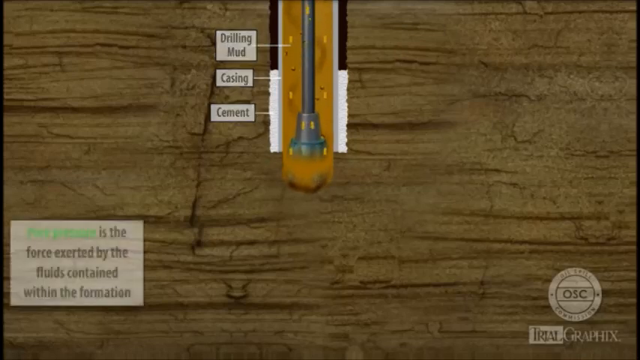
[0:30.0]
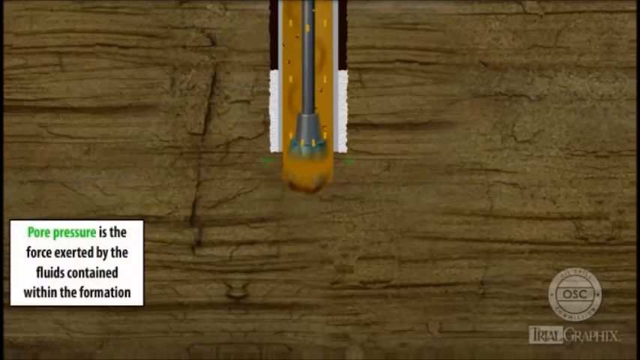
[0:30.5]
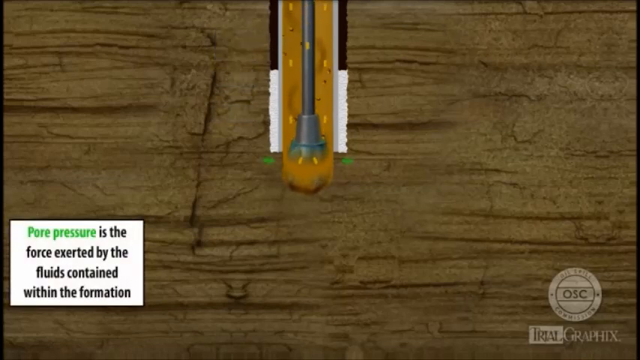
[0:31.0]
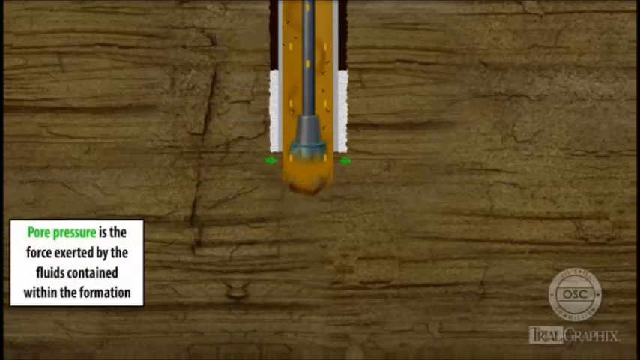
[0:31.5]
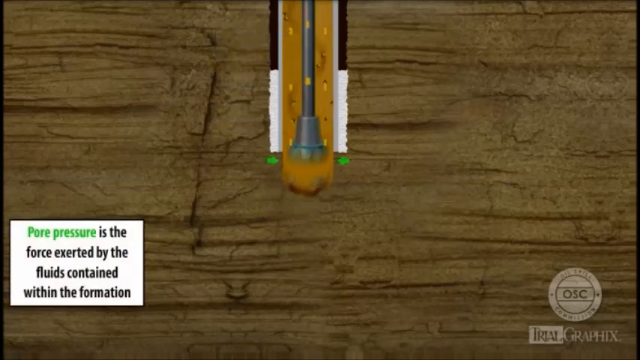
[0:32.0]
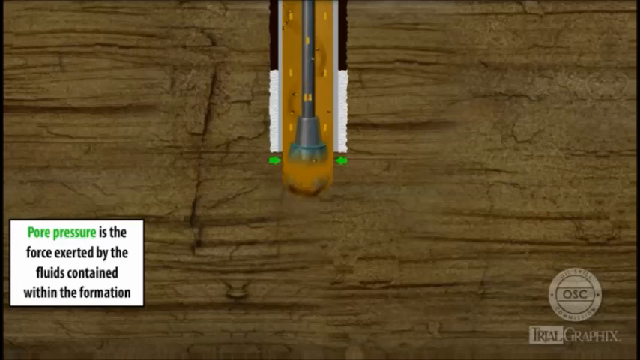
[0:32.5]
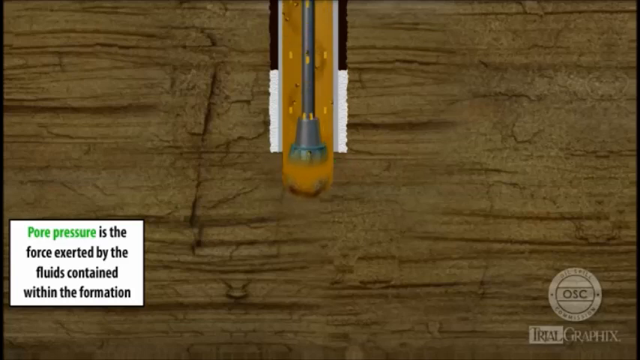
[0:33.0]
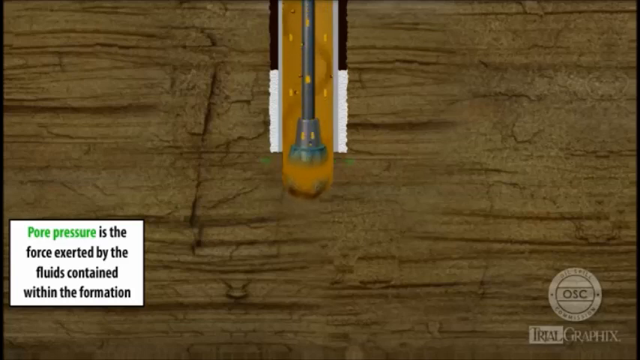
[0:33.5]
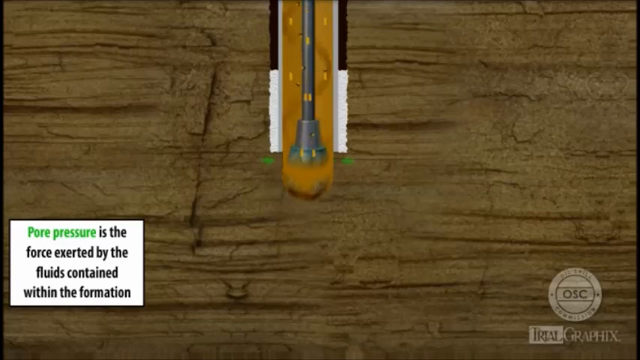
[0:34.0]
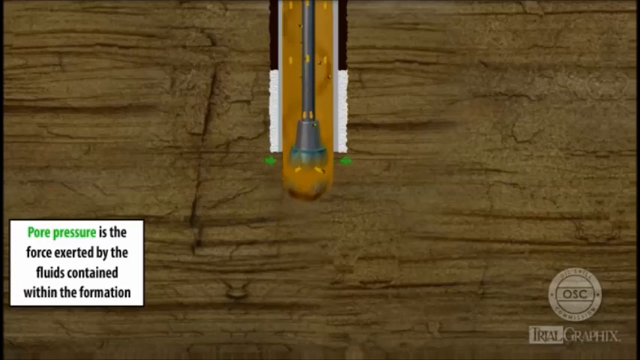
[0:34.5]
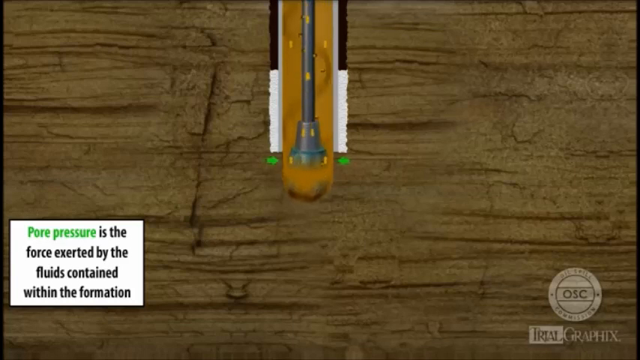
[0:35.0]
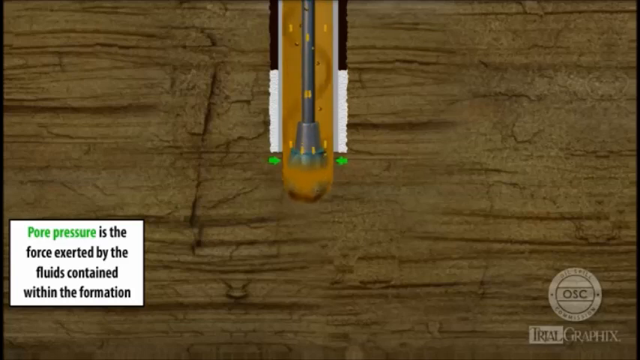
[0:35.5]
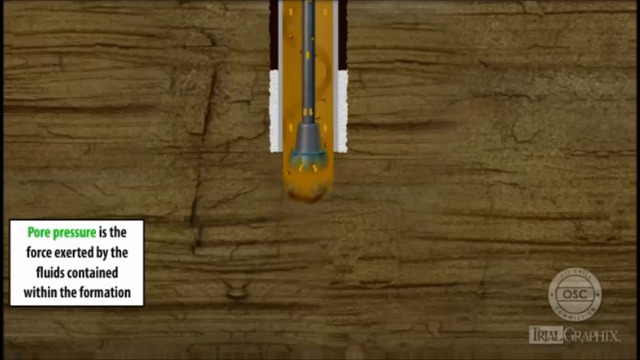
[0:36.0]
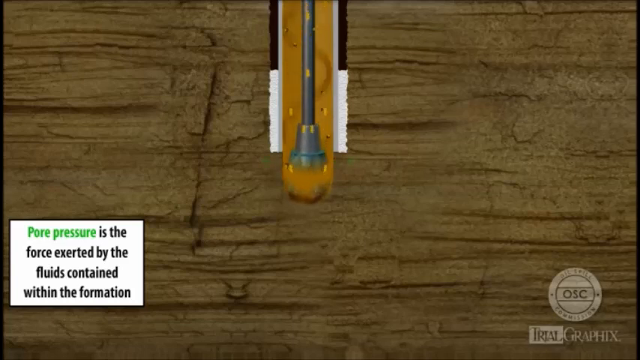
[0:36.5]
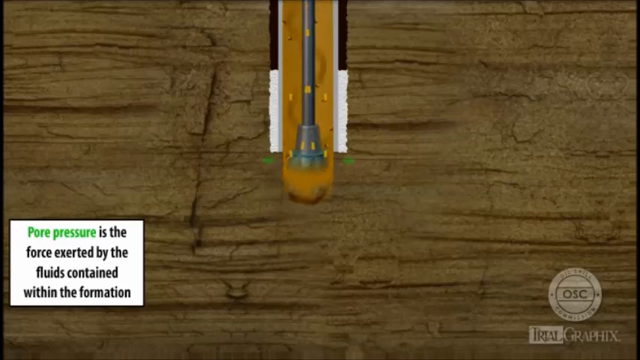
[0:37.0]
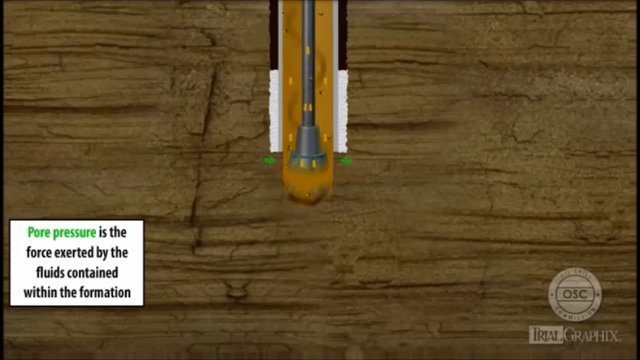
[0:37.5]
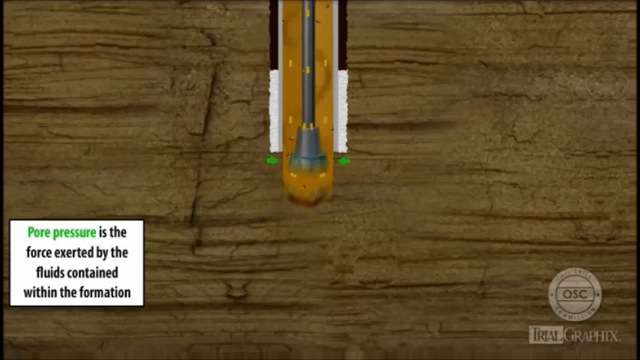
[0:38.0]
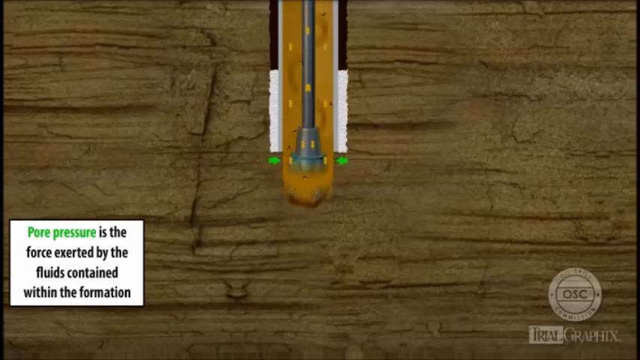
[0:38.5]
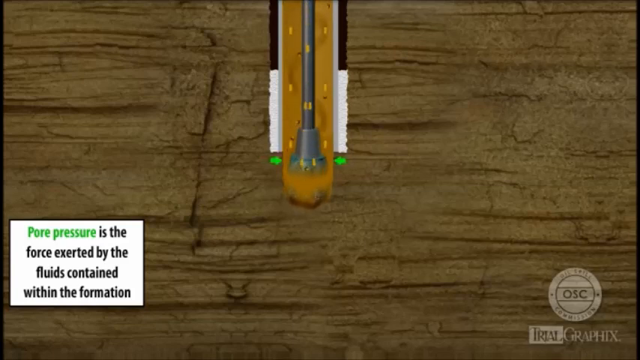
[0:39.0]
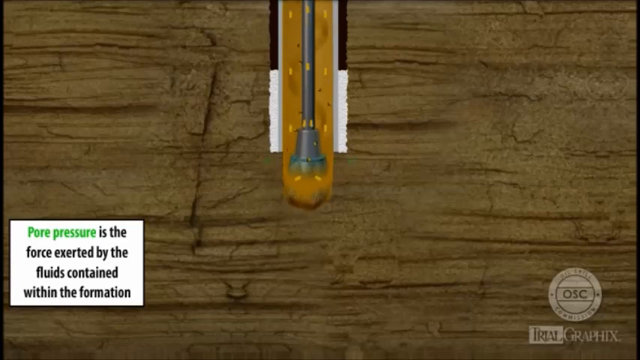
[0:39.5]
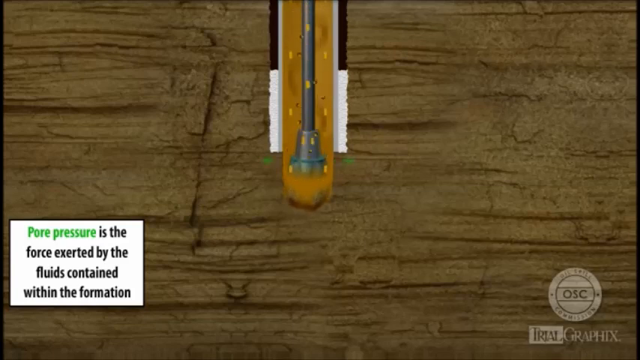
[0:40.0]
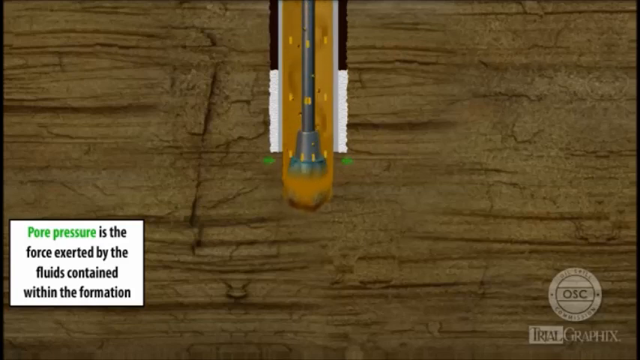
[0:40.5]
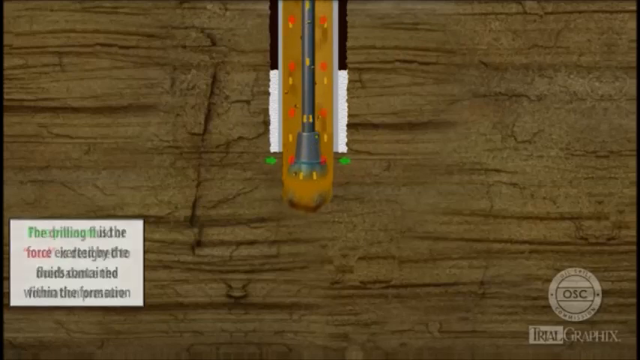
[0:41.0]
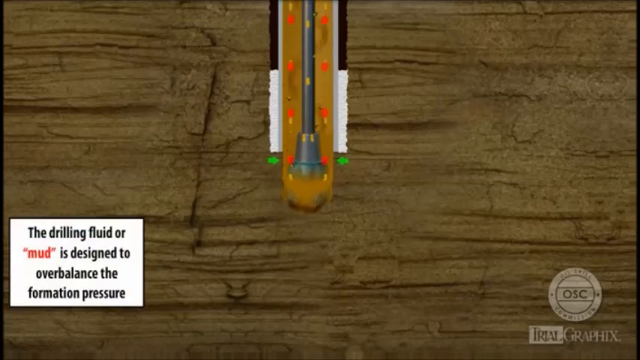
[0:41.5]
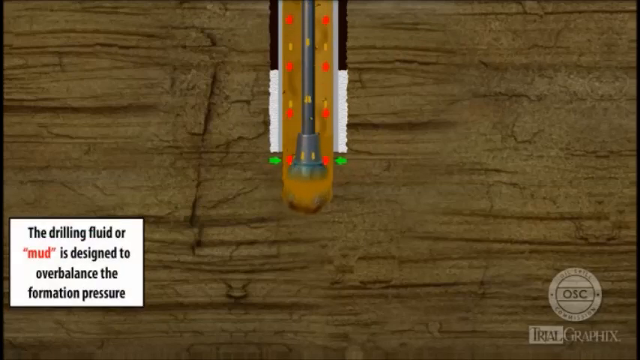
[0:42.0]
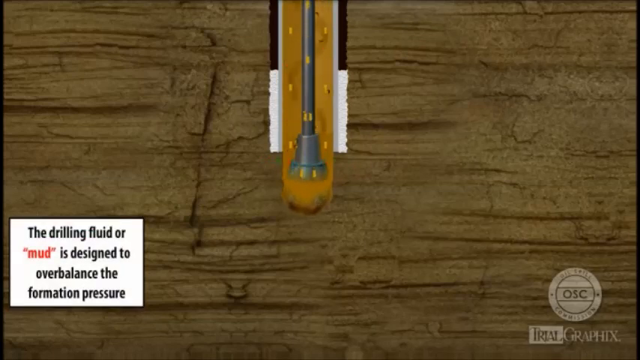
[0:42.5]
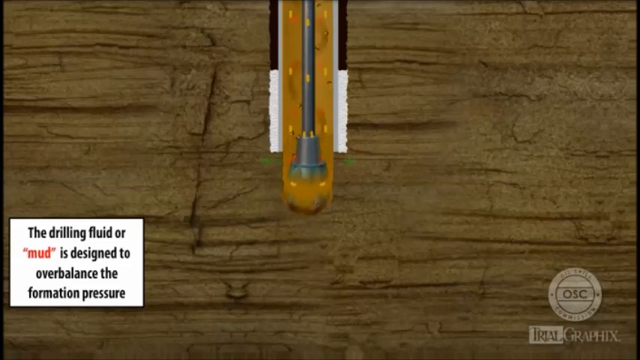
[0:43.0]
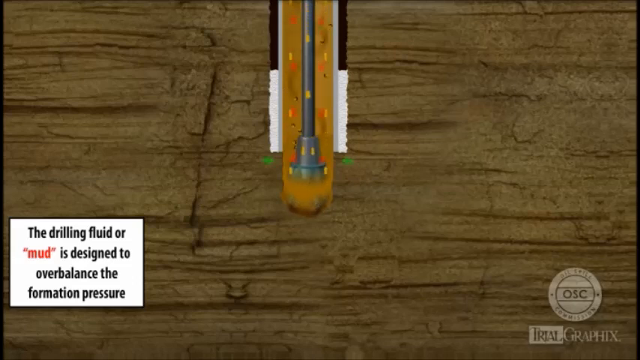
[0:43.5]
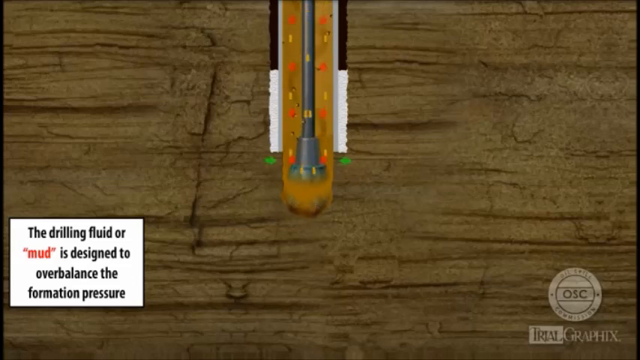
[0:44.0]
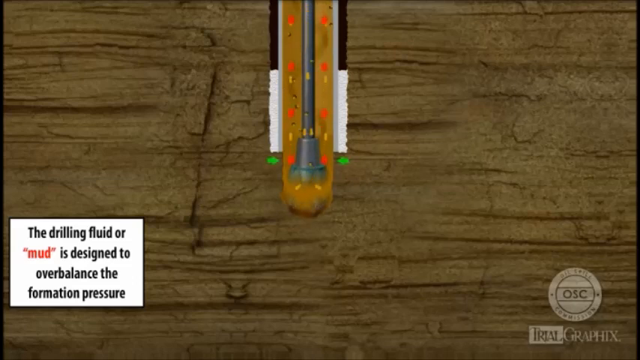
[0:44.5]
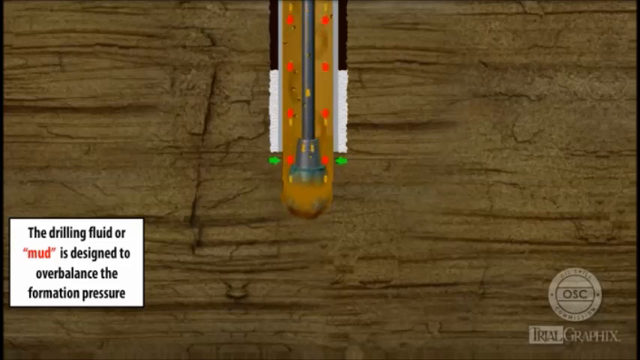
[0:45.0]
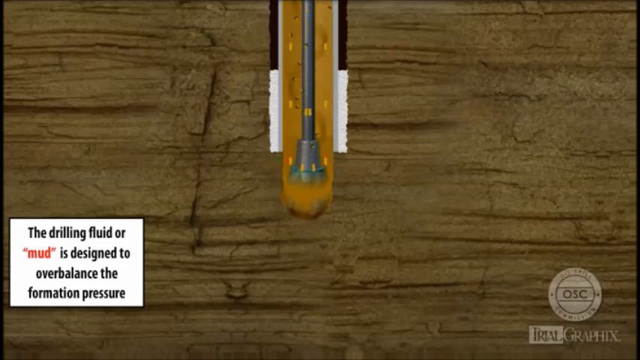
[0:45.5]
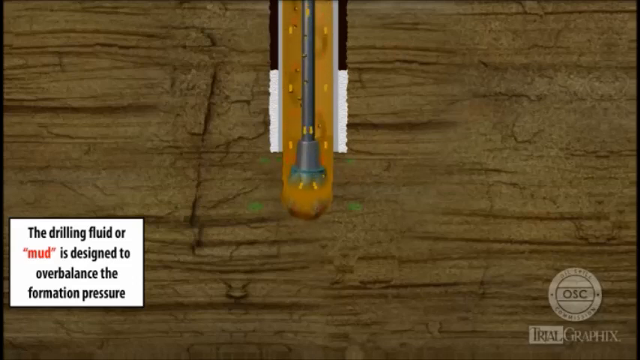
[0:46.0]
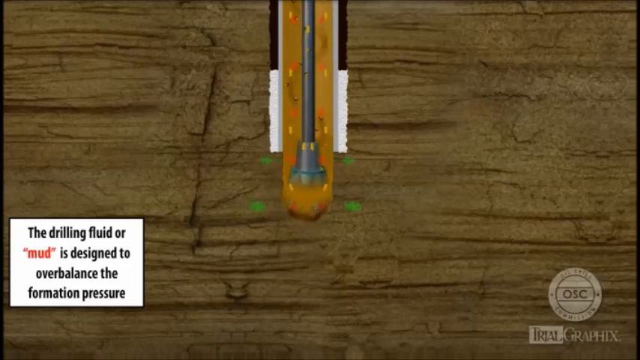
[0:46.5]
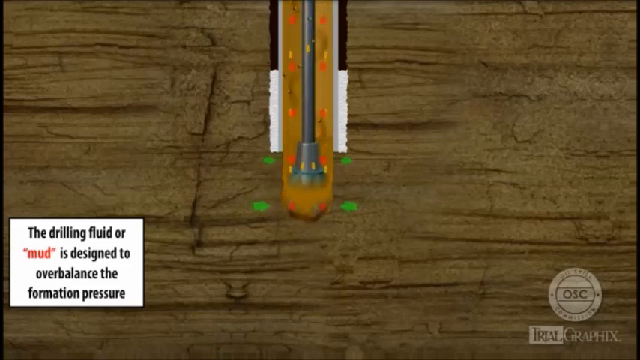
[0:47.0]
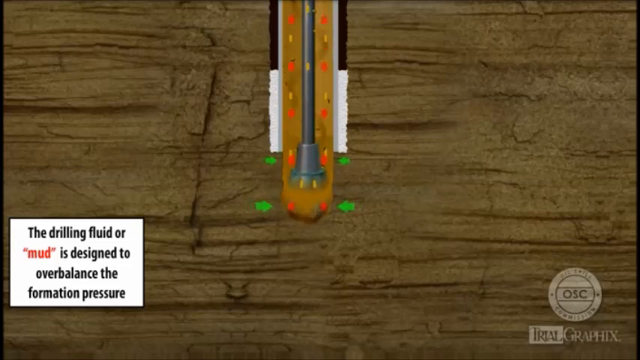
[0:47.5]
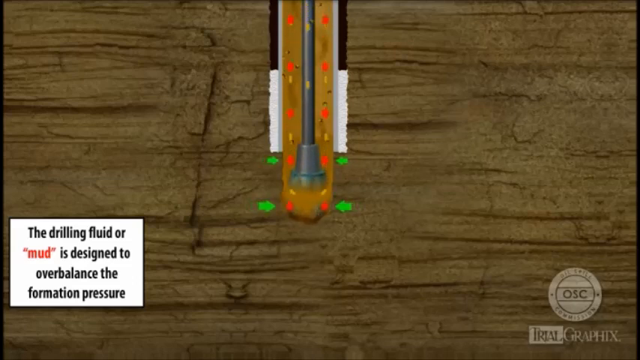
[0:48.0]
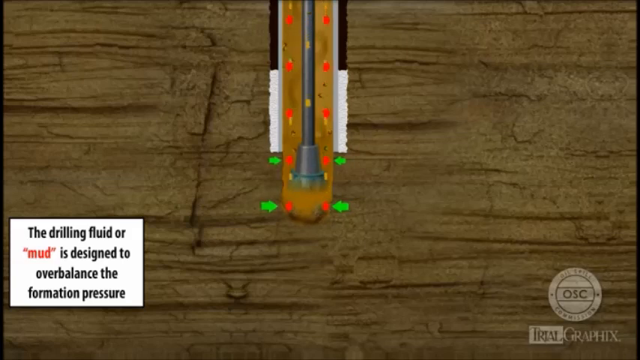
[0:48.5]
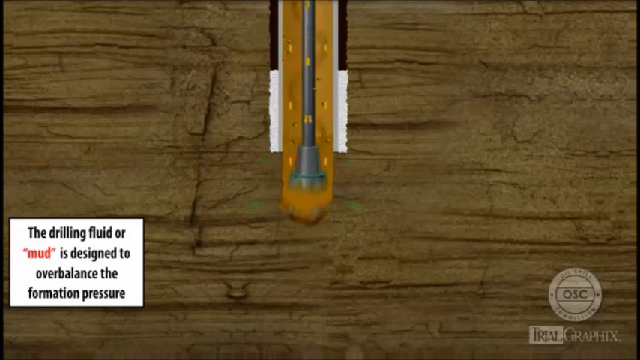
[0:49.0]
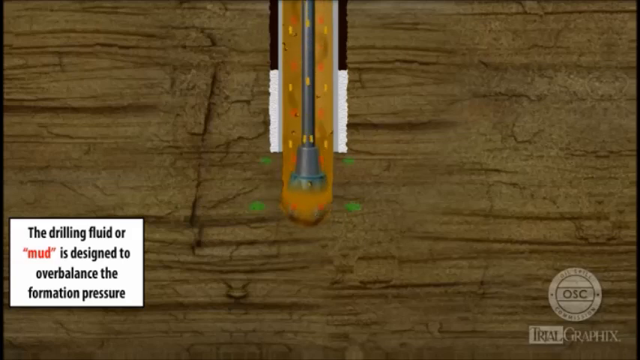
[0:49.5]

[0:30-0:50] The drill moves downwards through a block of wood, and a logo reading "OSC" inside a circular structure is at the bottom right. The text "pore pressure is the force exerted by the fluids contained within the formation" appears inside a rectangular shape with a white background; "pore pressure" is in green font and the rest is in black. As the drill moves down, particles move upwards; they appear yellow at first and transition to red in a swirling motion. Four arrows on opposing sides point directly at the very tip of the drill, moving slowly.